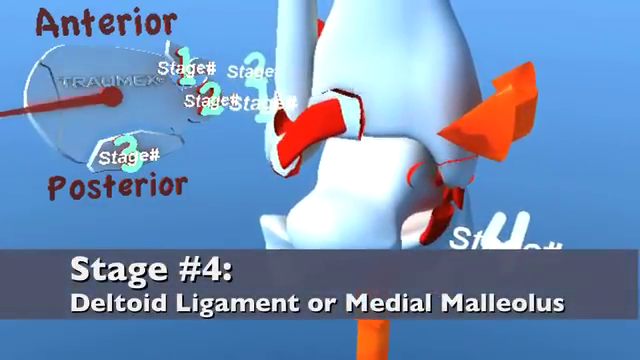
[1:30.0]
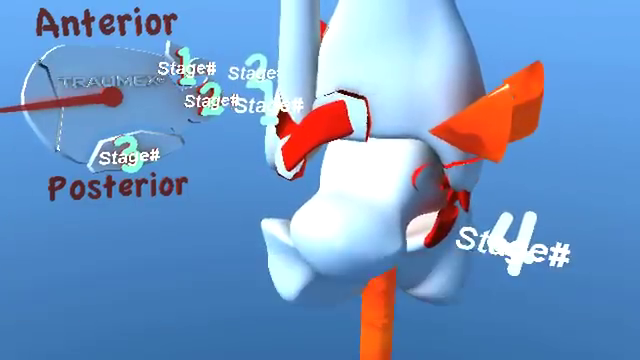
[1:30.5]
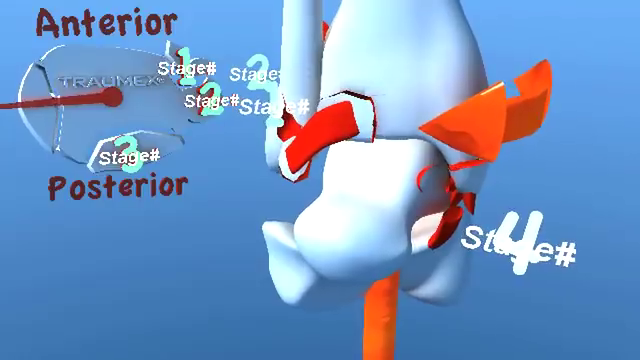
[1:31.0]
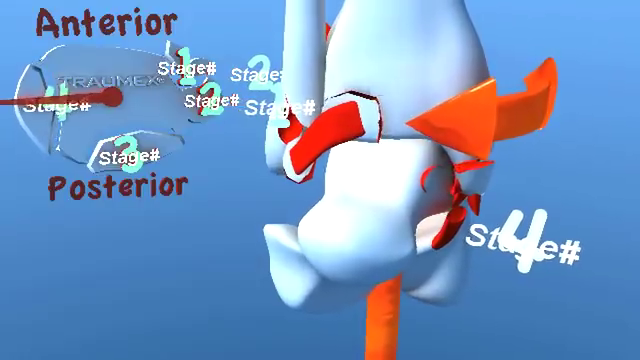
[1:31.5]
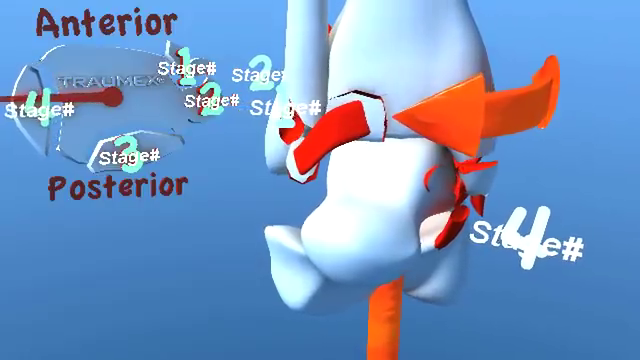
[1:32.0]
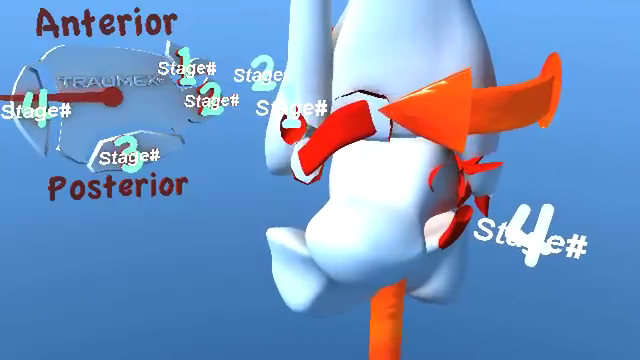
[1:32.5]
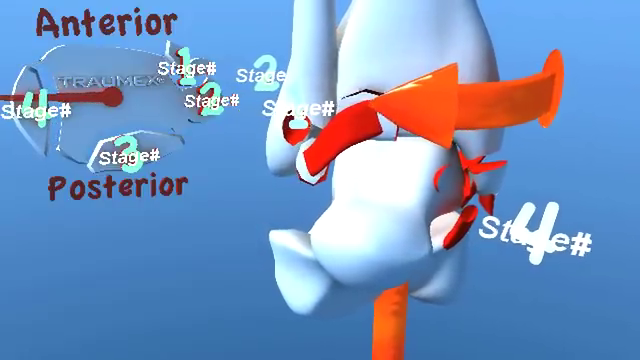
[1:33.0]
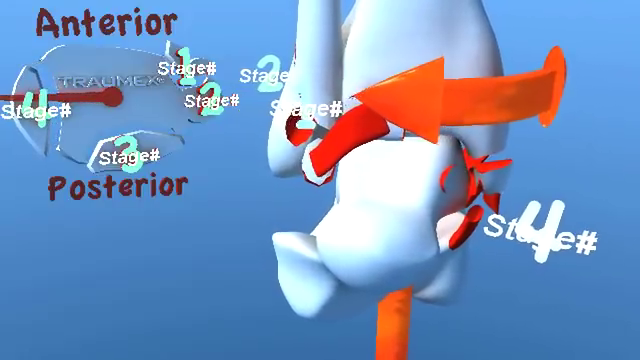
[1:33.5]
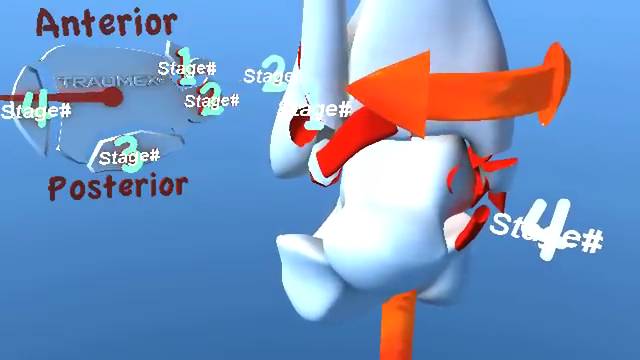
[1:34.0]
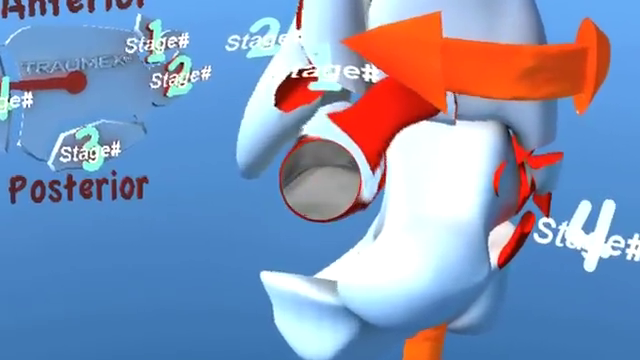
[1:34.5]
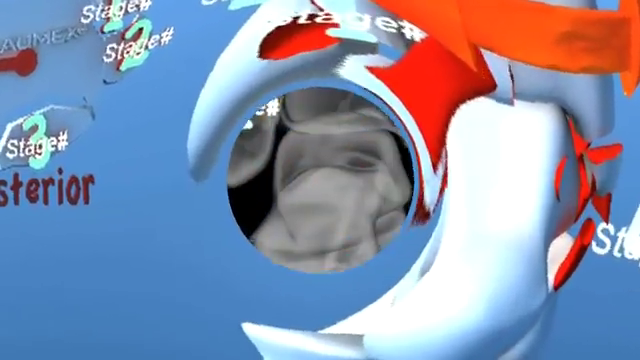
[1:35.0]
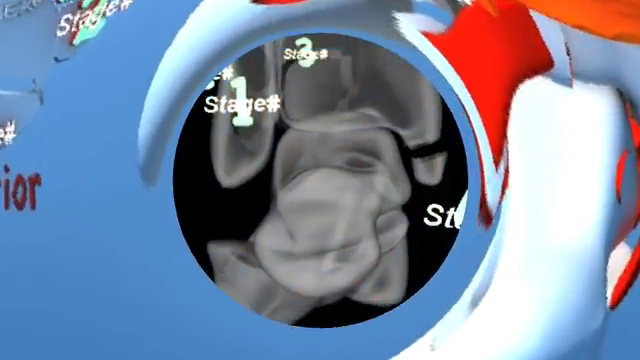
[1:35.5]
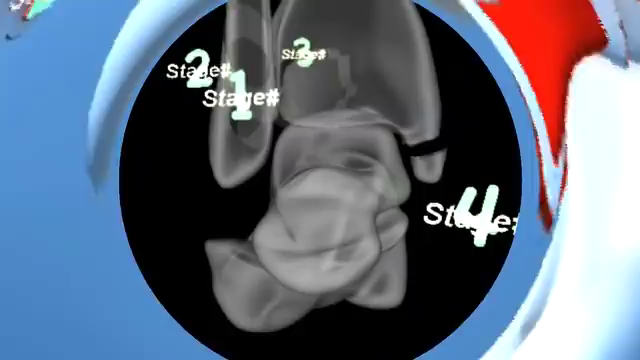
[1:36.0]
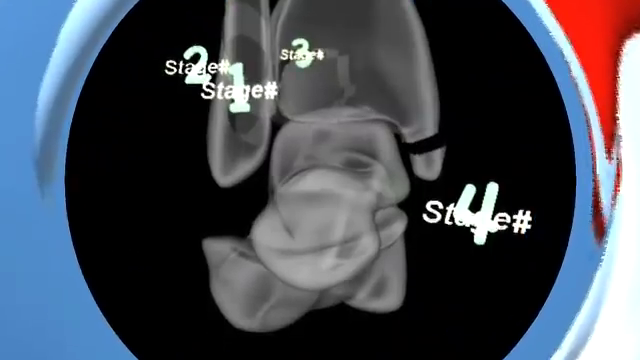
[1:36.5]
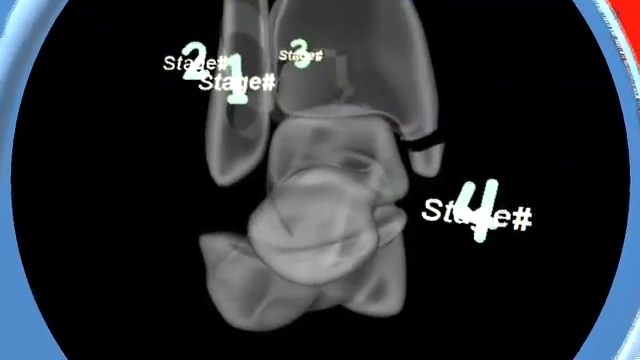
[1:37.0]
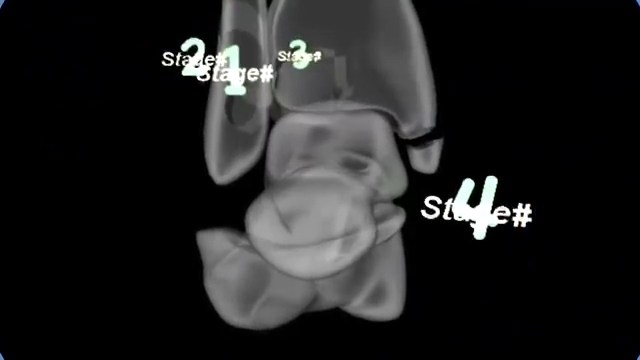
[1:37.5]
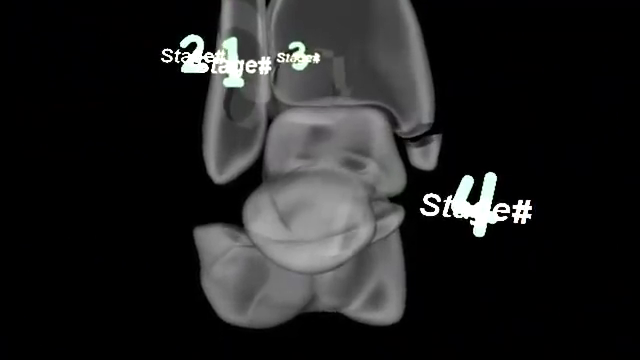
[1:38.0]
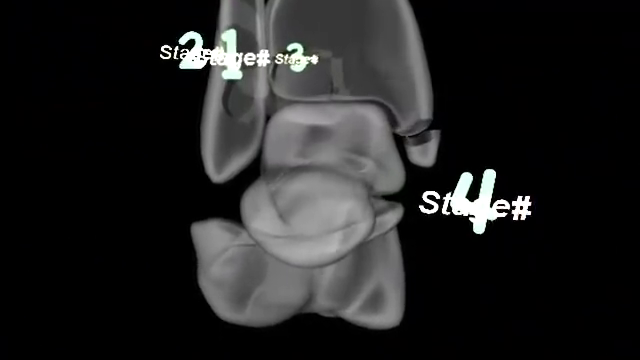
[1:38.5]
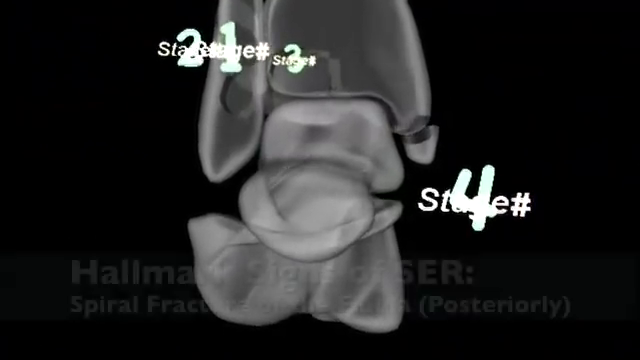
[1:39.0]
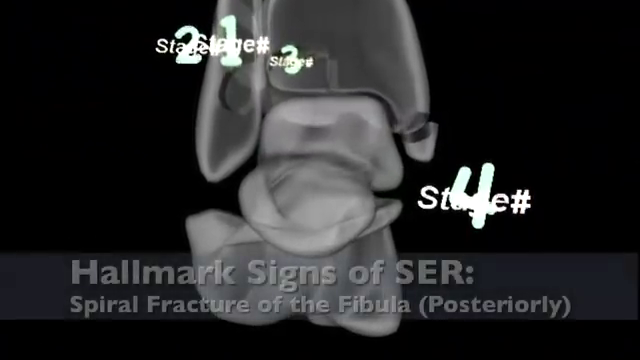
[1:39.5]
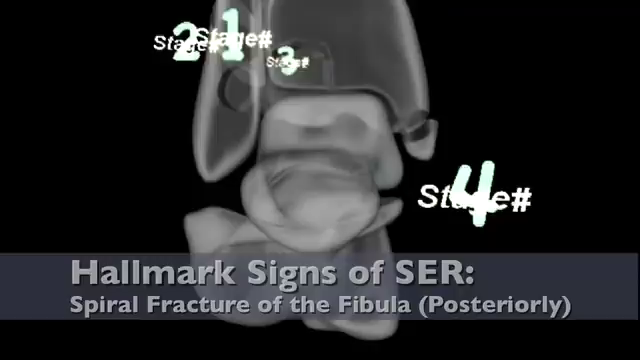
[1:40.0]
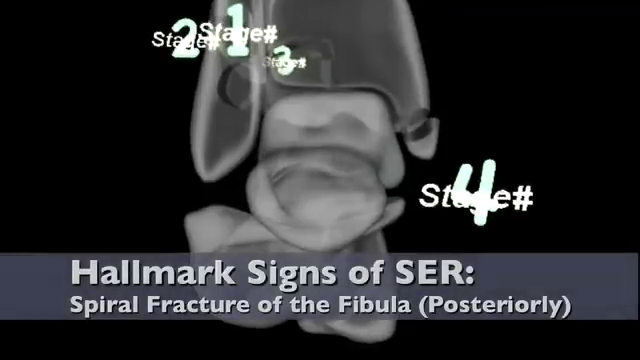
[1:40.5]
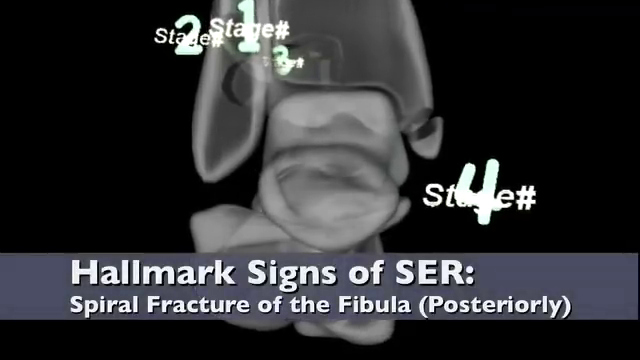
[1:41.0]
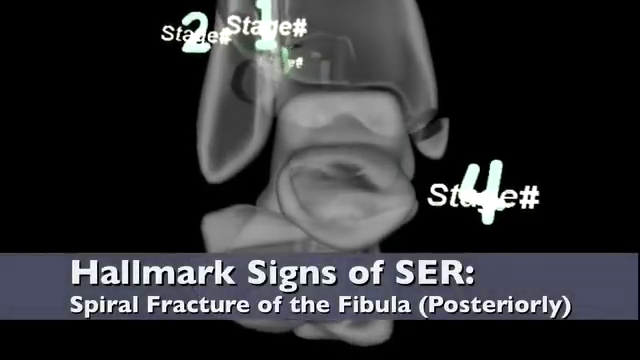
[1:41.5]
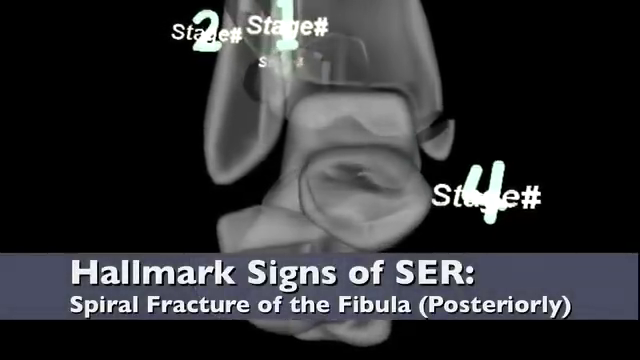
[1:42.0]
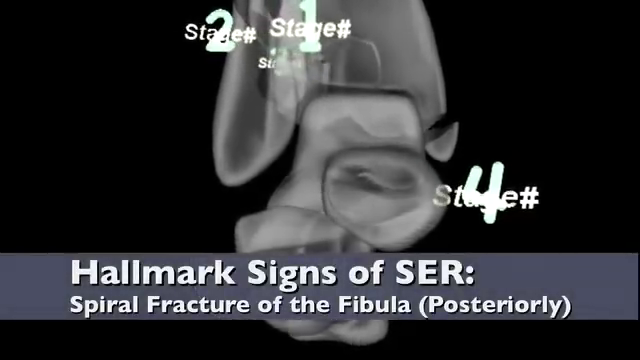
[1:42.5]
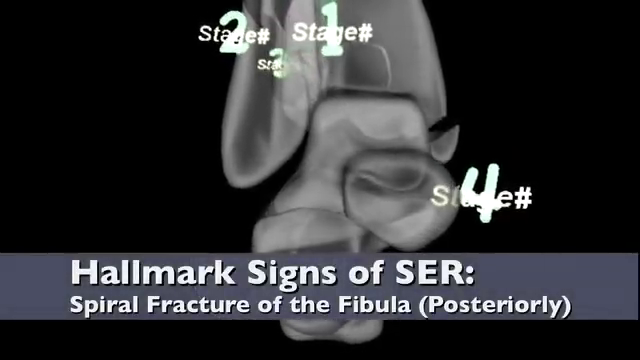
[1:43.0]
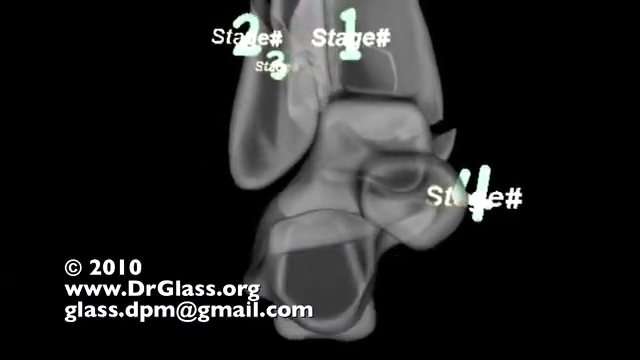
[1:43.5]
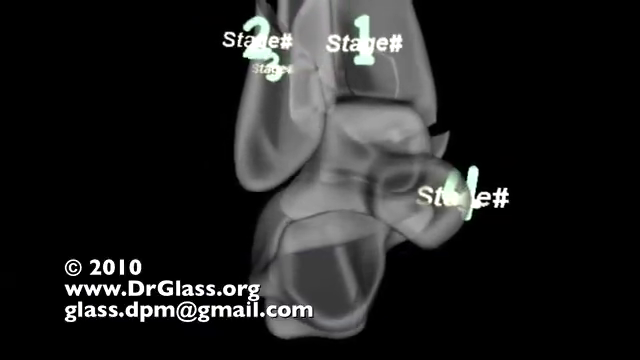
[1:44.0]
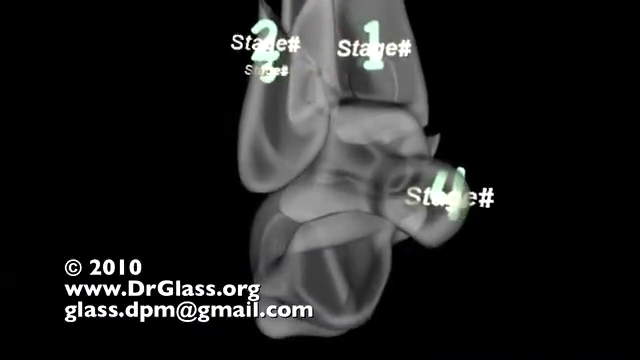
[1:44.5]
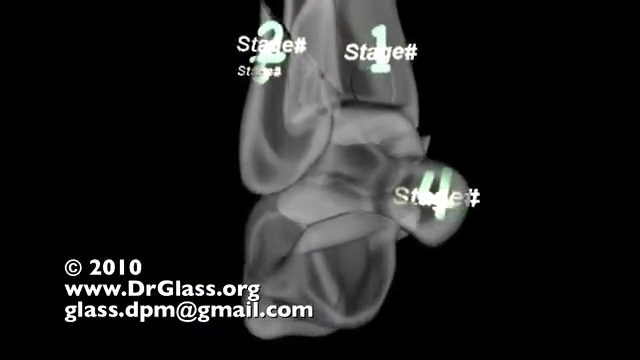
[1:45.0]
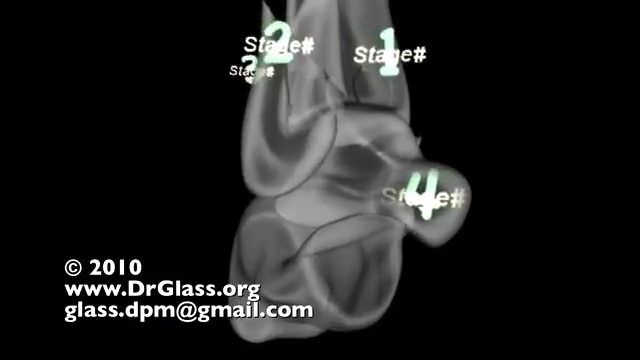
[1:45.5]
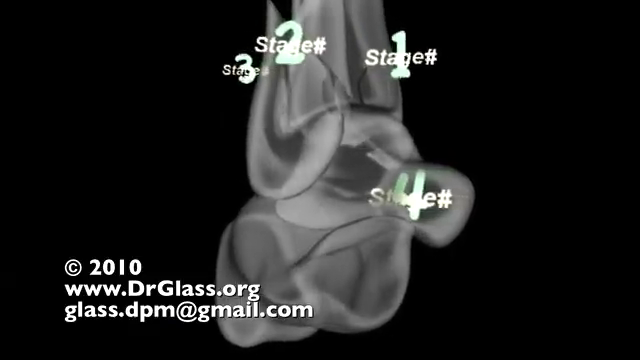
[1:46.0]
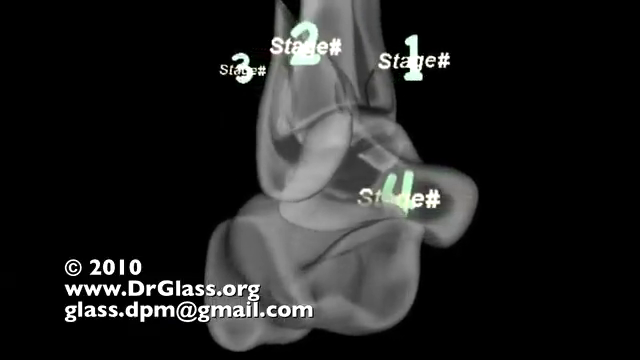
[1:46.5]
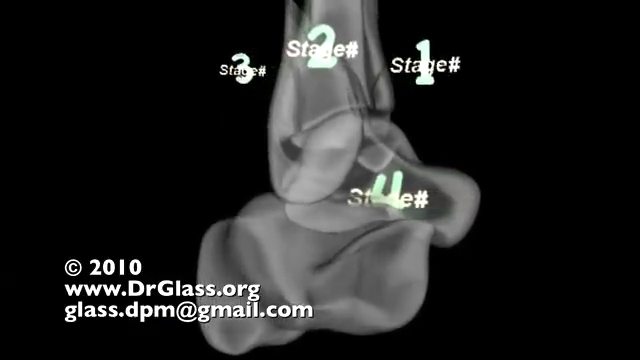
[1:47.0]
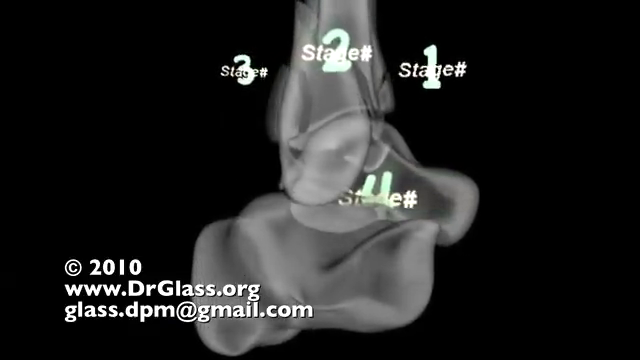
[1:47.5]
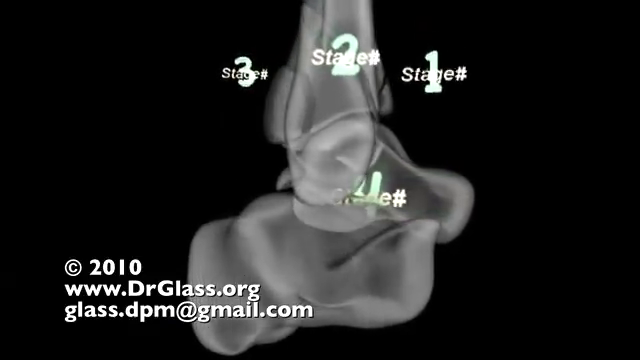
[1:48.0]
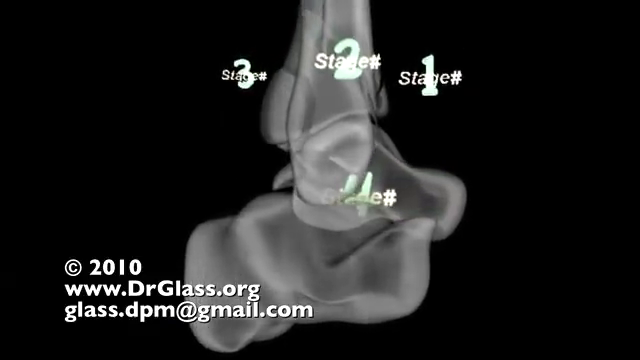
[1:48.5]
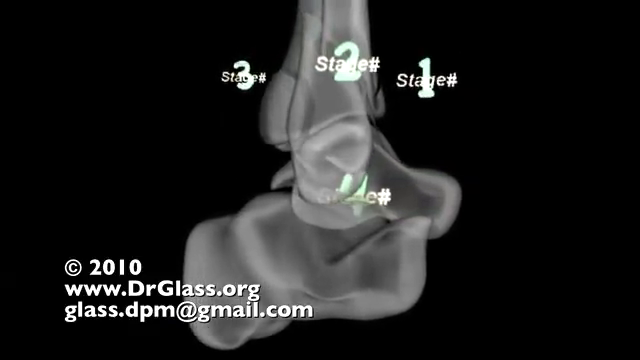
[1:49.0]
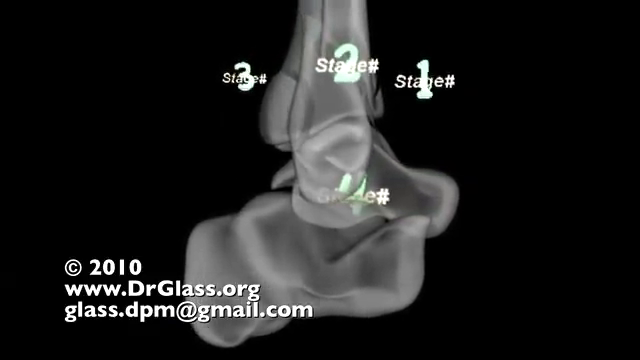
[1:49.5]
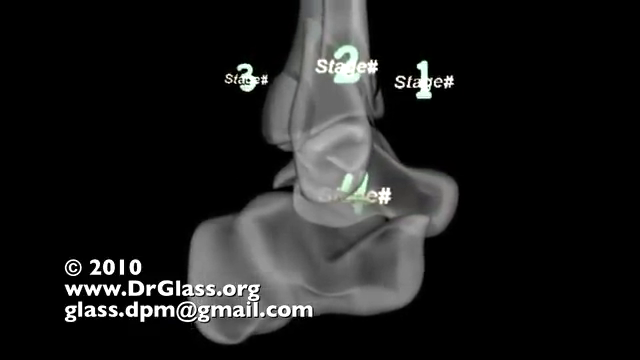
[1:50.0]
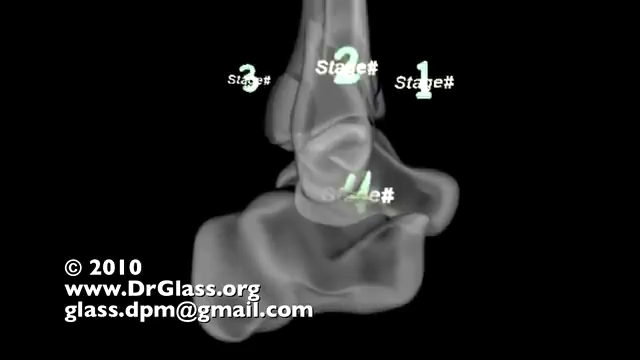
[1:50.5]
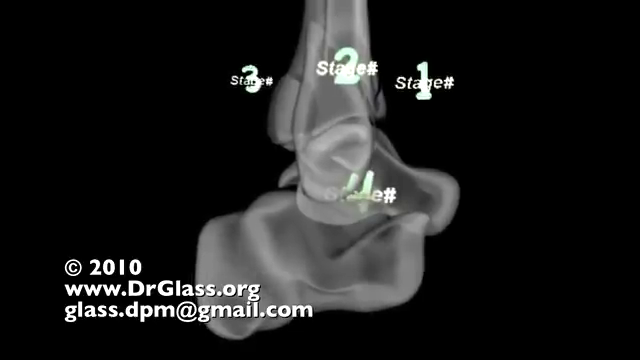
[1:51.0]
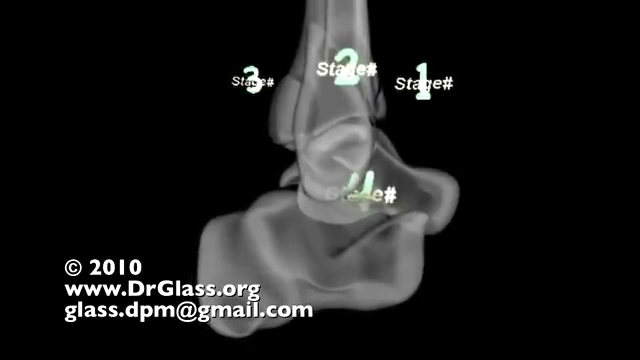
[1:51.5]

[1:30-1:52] The arrow continues to rotate to the left. On the left-hand side, the clock, which is also the upright of the bone, now points at nine o'clock with "stage four". On this clock face, used as the bone, breakages appear at stage one, stage two, stage three and stage four, and they begin to separate from the main bone. A small circle appears in the diagram, and the camera zooms into it, removing the animation. An x-ray of the broken ankle is shown, with stage one, stage two and stage three at the top left and stage four at the bottom right. The bar appears with white text. The x-ray rotates anti-clockwise so that the fractures at each stage, one through four, are clearly visible. The camera then zooms out and the screen turns black.